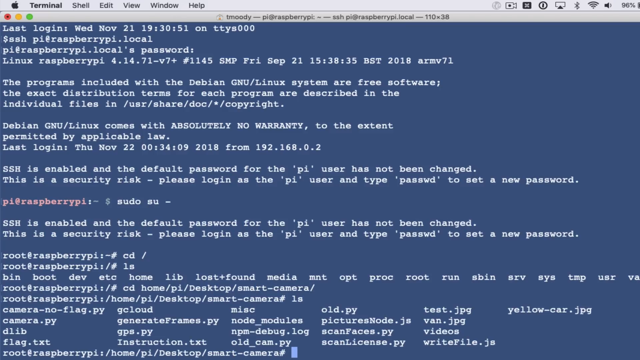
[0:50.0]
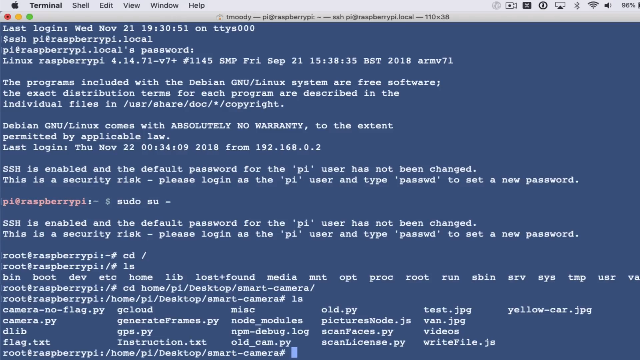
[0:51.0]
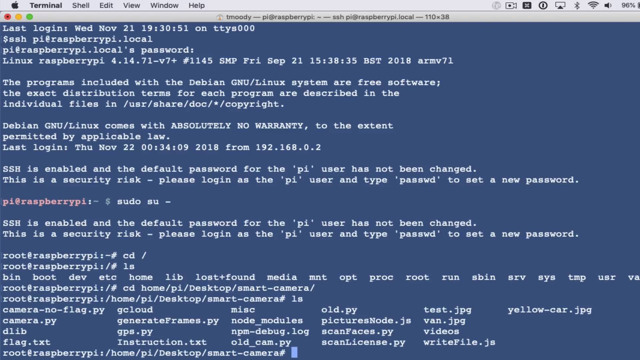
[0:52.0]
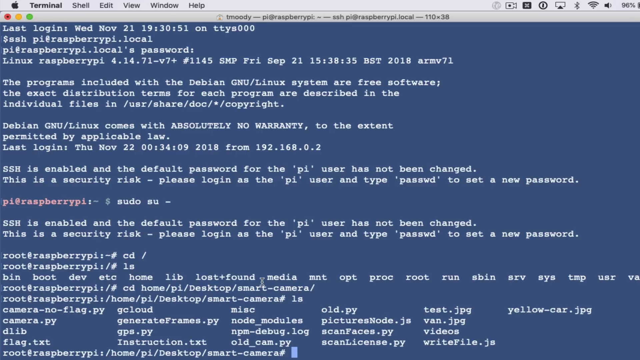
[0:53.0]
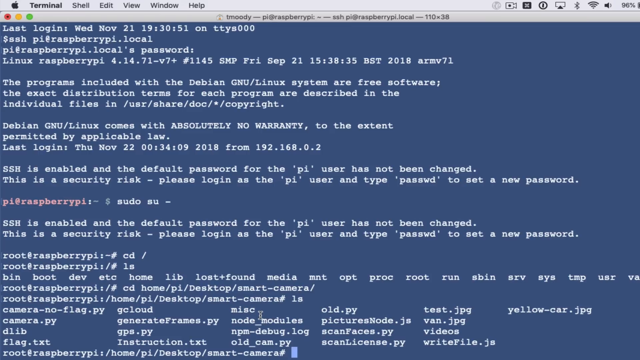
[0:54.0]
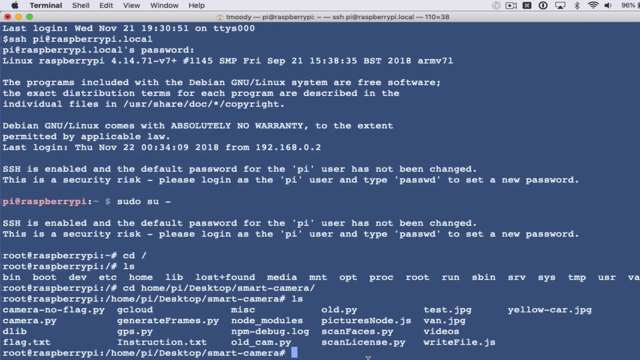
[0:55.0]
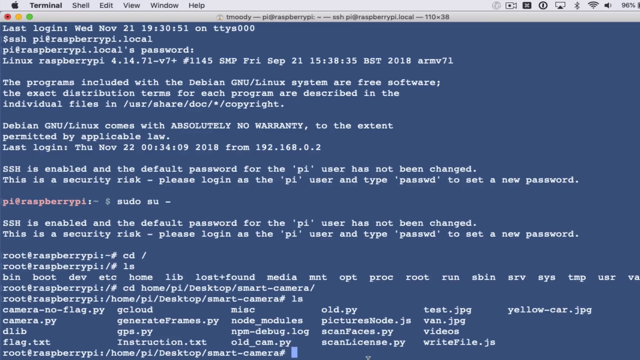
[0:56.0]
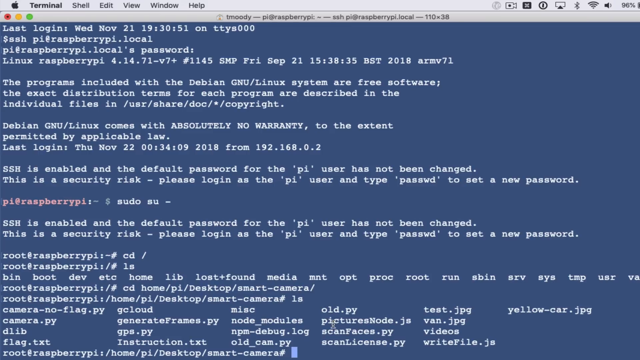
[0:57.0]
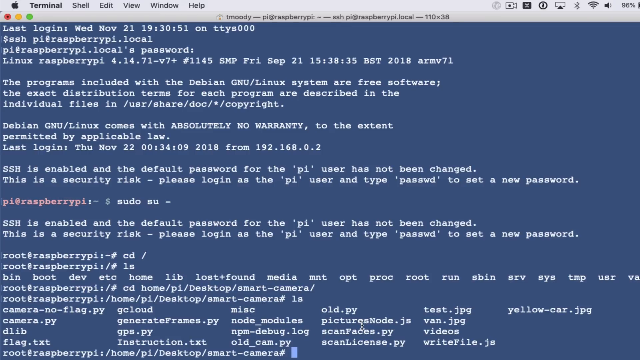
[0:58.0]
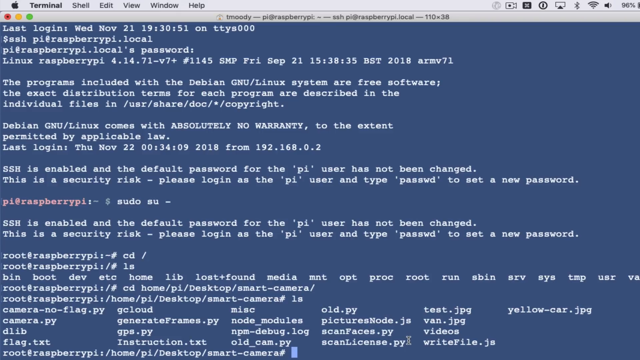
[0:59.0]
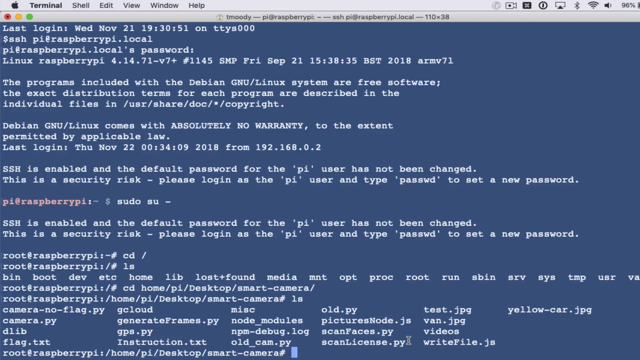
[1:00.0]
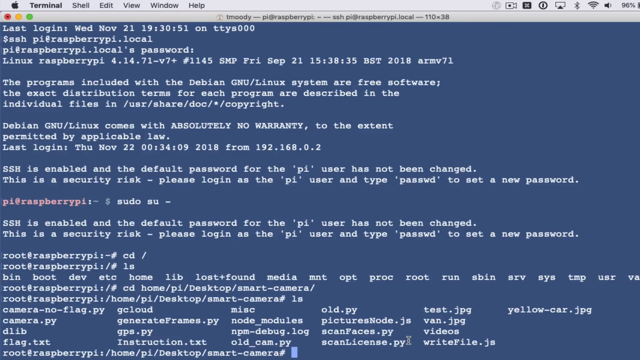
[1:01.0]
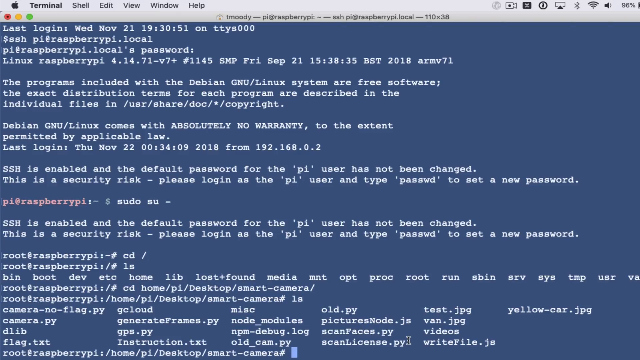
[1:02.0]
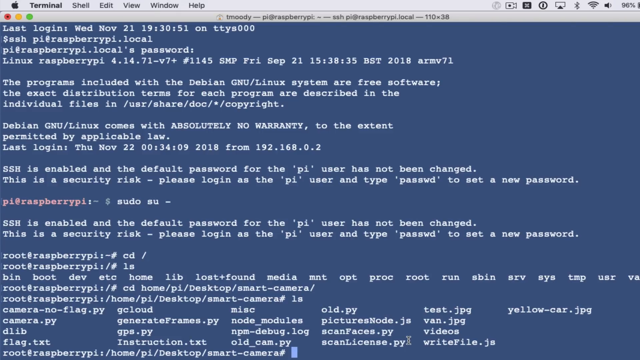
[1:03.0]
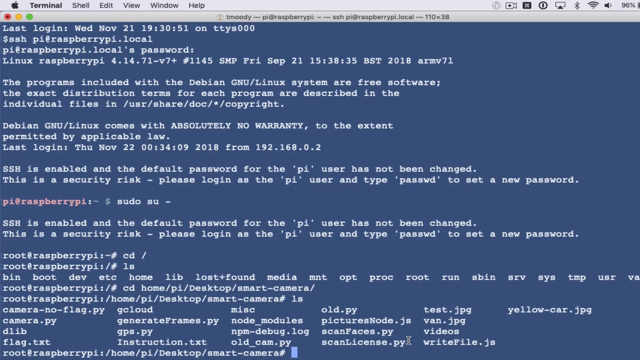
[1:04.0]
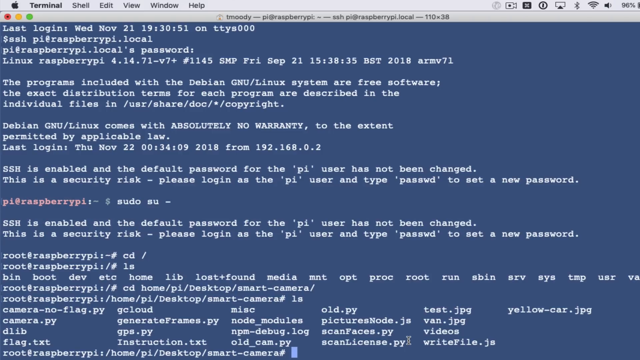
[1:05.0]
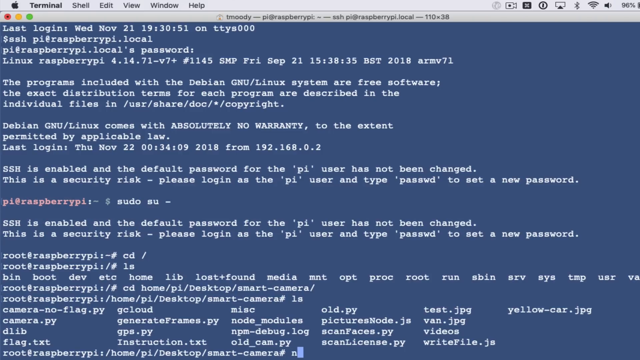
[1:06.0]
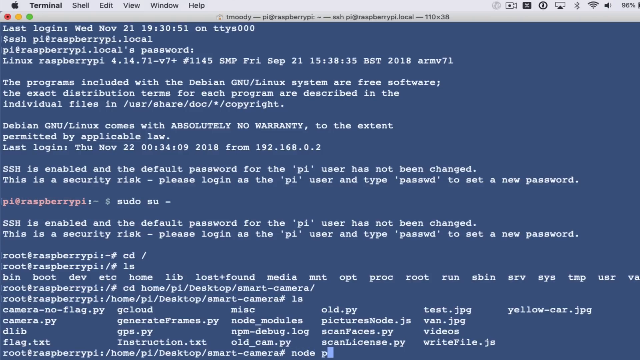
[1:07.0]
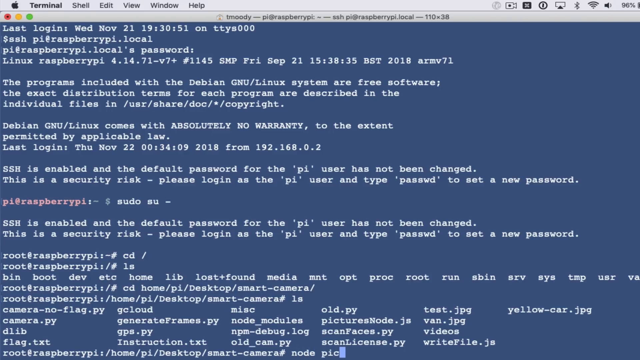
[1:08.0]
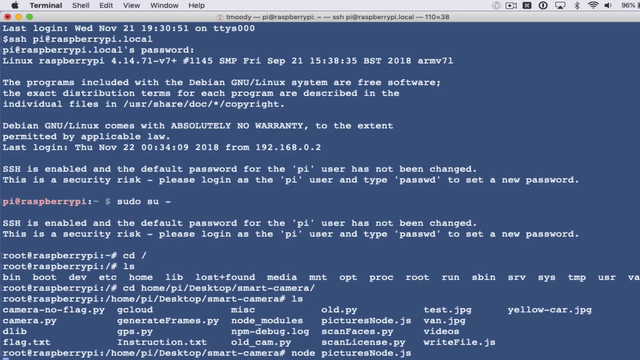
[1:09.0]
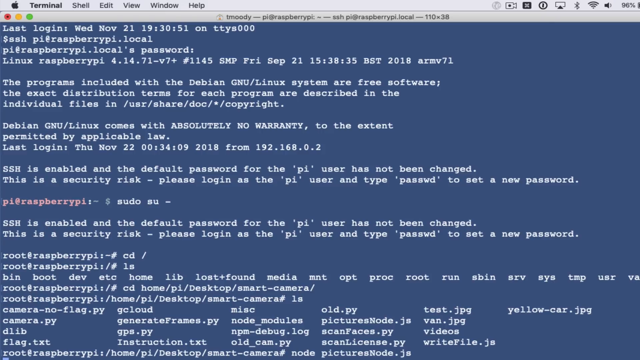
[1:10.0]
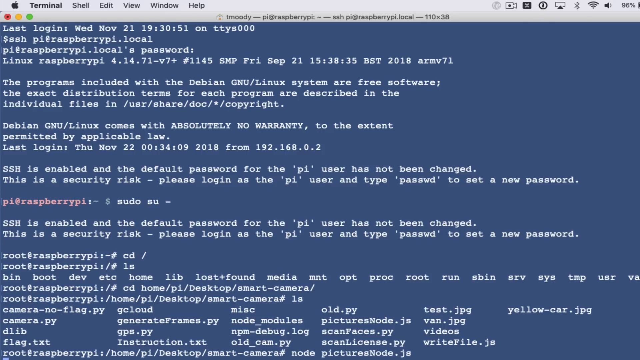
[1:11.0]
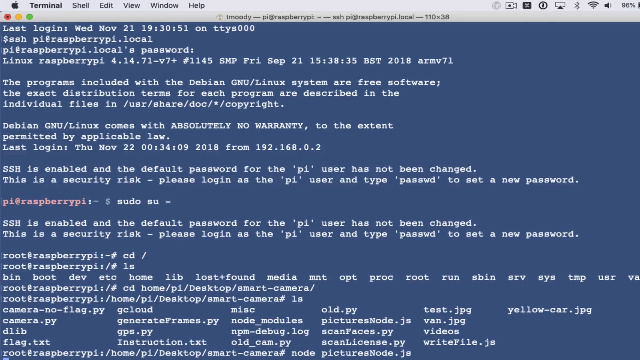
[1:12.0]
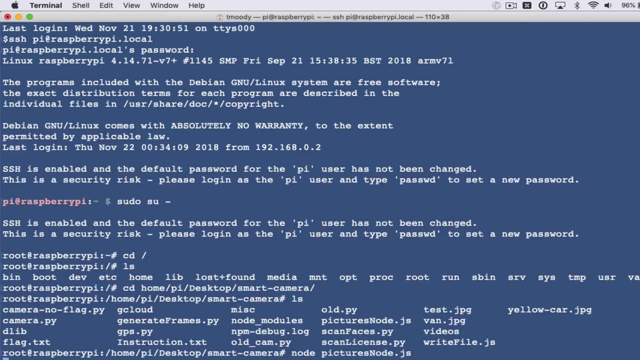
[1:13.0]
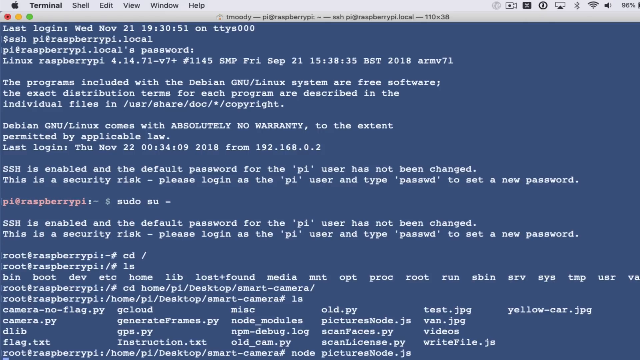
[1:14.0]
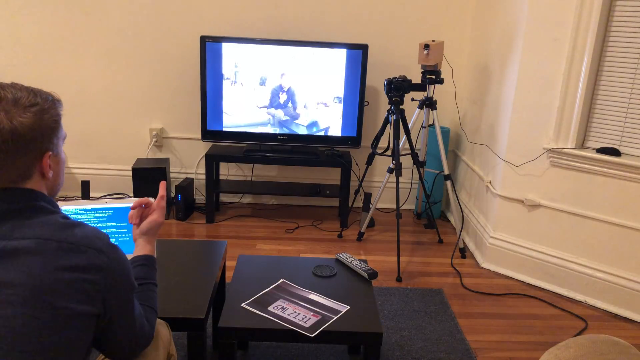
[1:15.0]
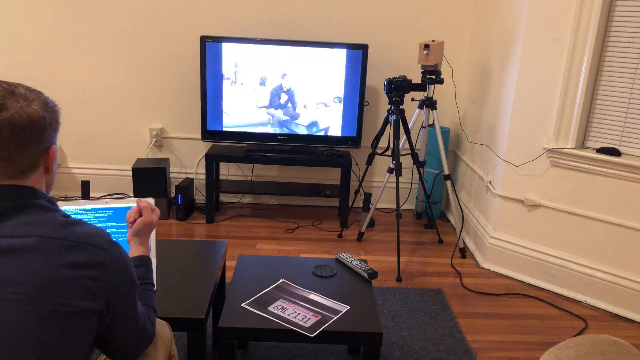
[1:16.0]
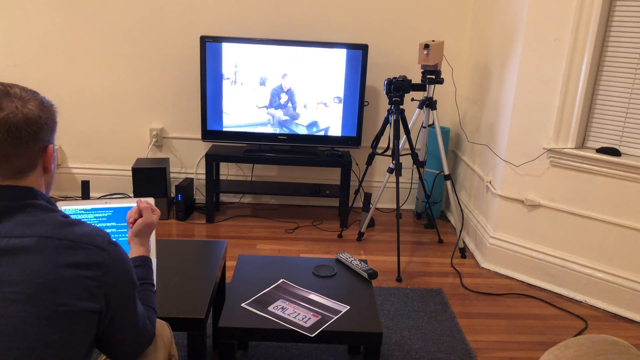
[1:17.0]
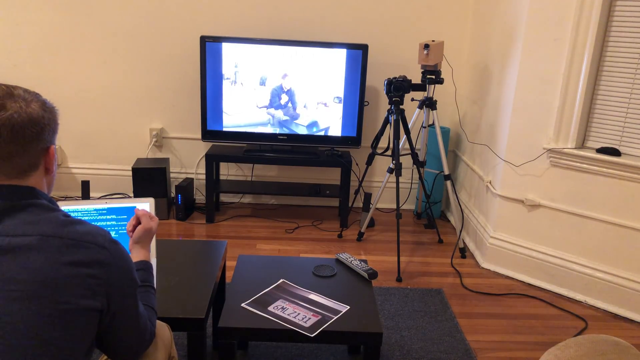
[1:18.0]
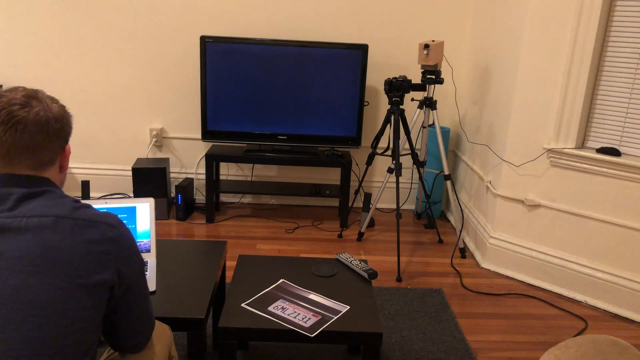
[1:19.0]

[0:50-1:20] The Apple screen appears again as a screen share. The man is back in the root of the Raspberry Pi local server and accesses the picture mode through it. He is apparently logging into a camera that runs Raspberry Pi, accessing it remotely through the terminal on his Apple computer. The screen shows "T. Moody", which is probably his name. The computer is still on Wi-Fi and at 96%. He watches his TV change: the TV seems to switch from a blank road to a view of him sitting on his couch, facing him, apparently from the cameras on the tripods in the right corner of the room.